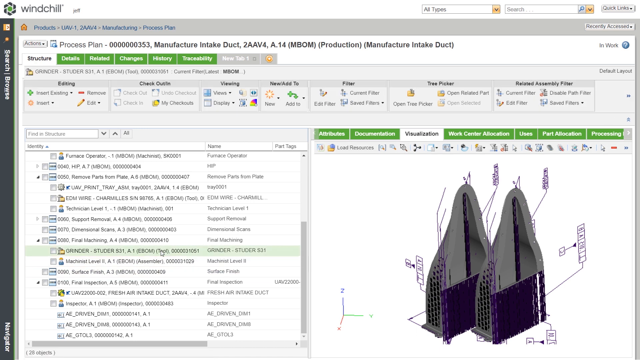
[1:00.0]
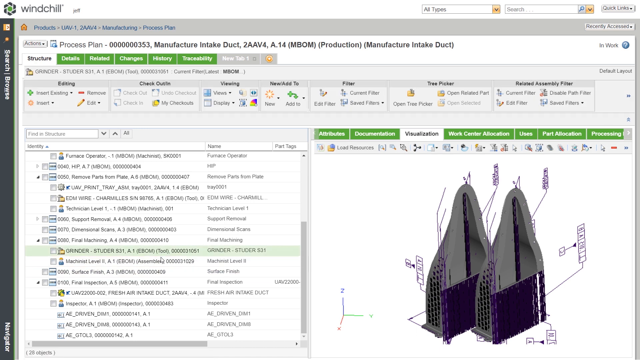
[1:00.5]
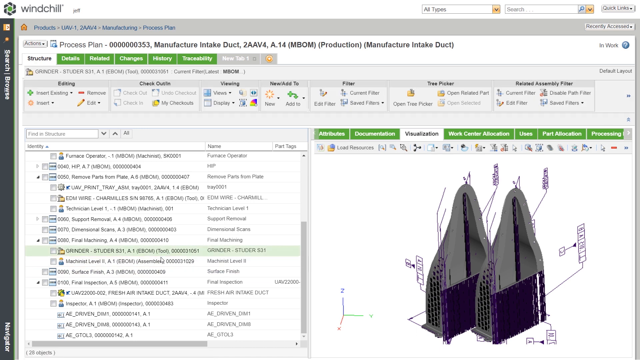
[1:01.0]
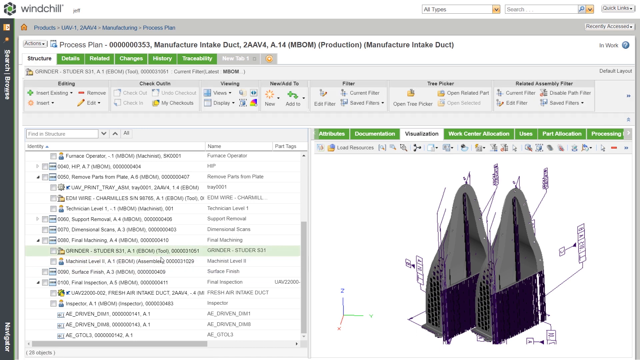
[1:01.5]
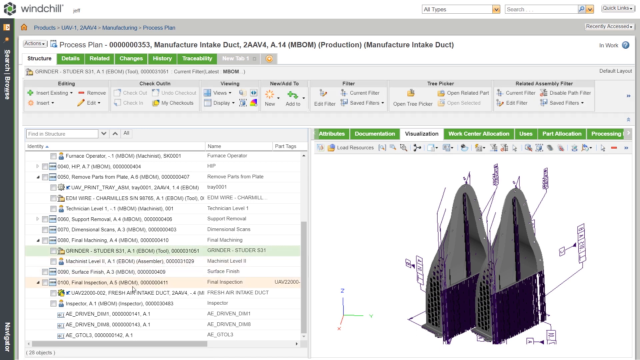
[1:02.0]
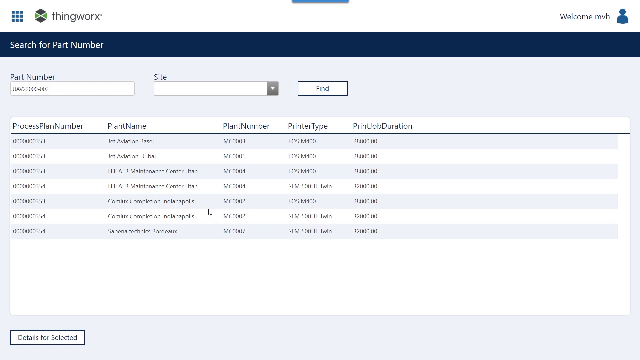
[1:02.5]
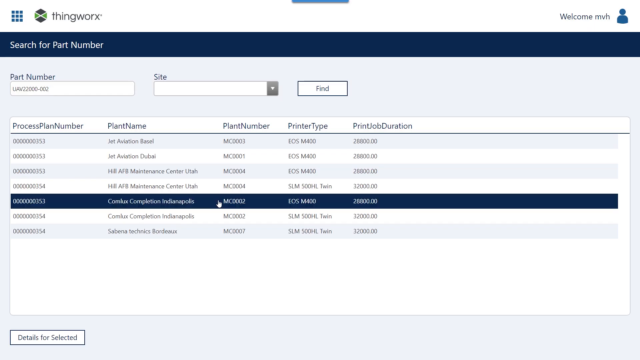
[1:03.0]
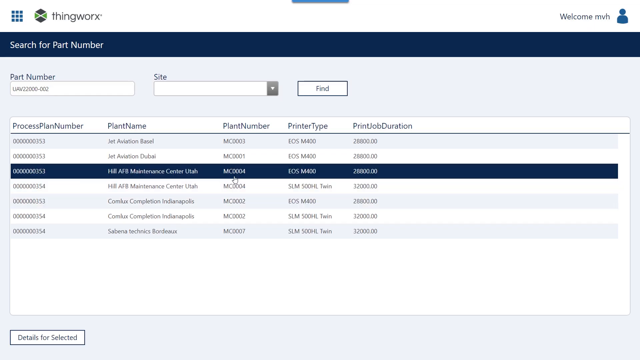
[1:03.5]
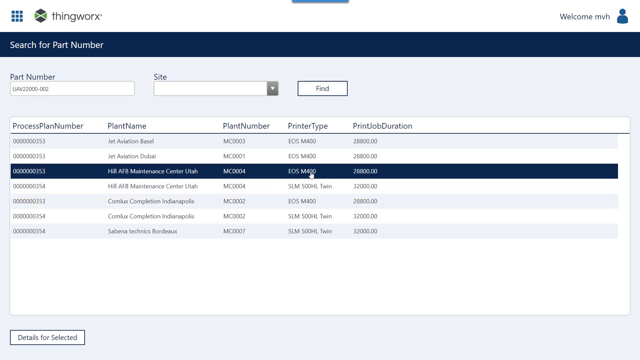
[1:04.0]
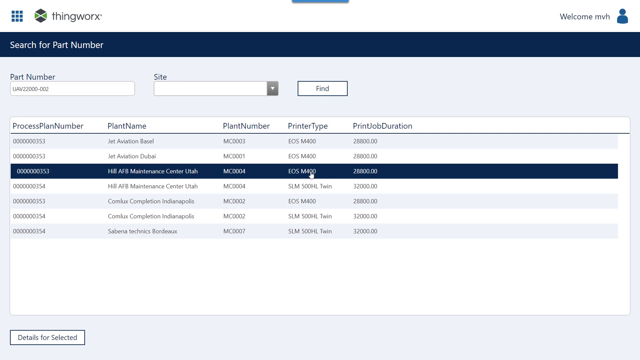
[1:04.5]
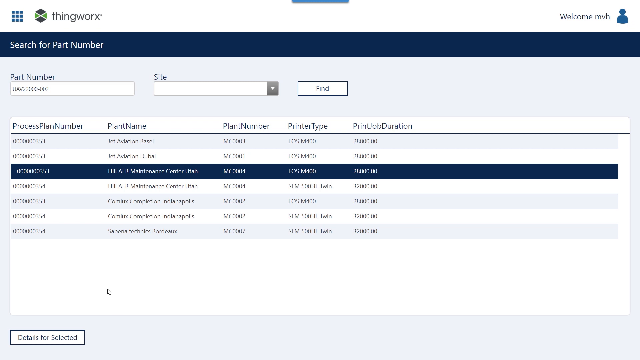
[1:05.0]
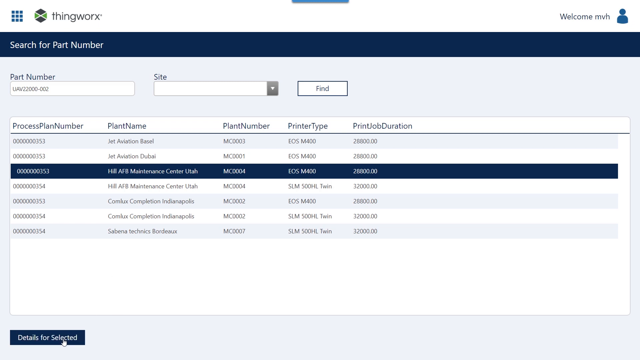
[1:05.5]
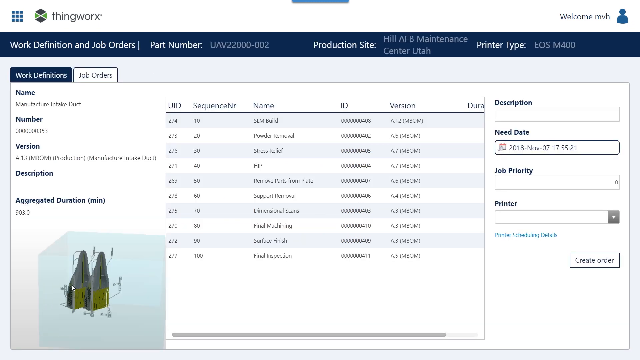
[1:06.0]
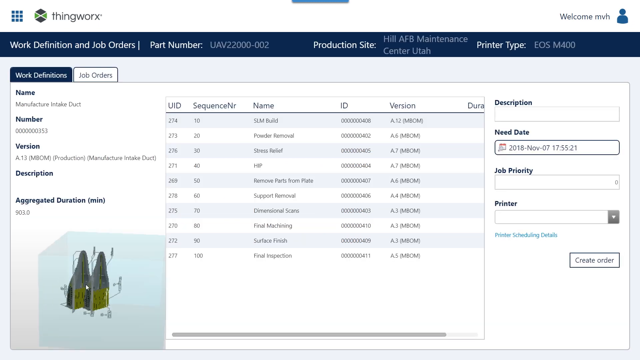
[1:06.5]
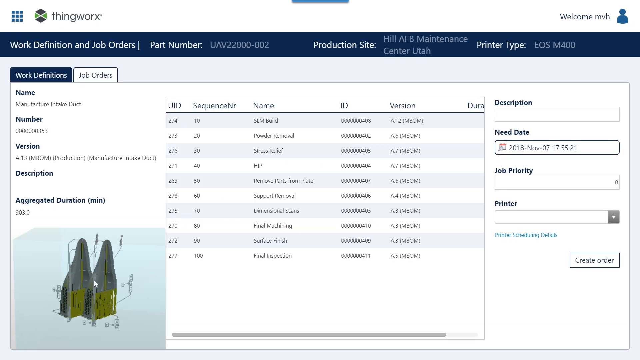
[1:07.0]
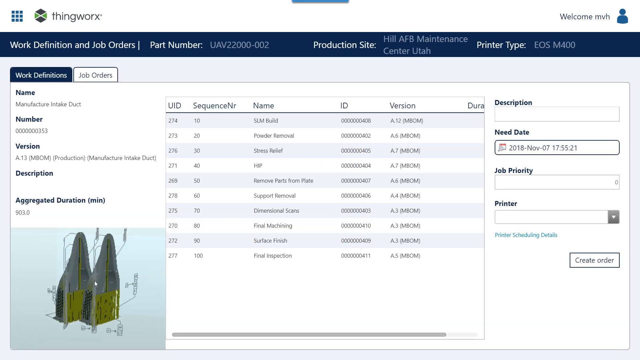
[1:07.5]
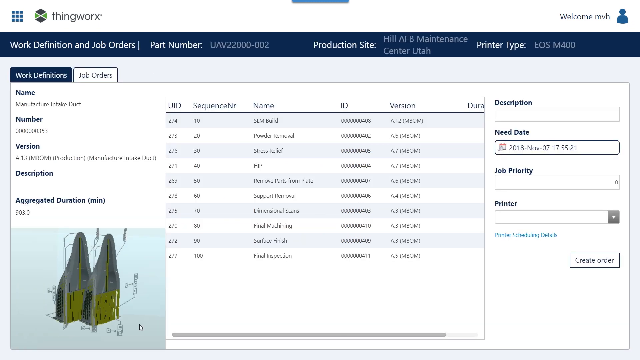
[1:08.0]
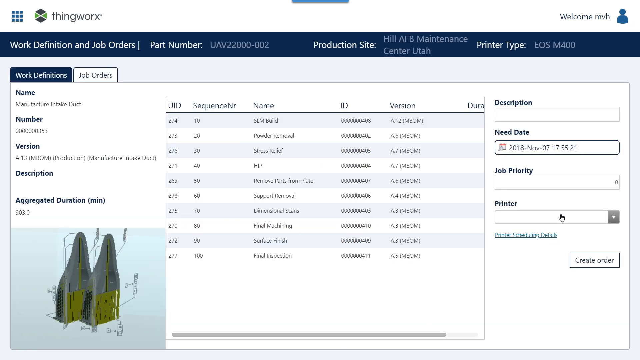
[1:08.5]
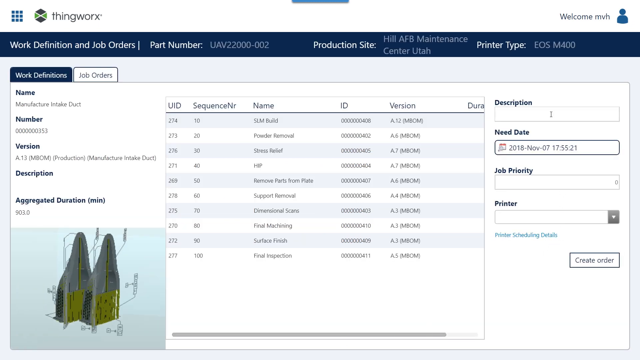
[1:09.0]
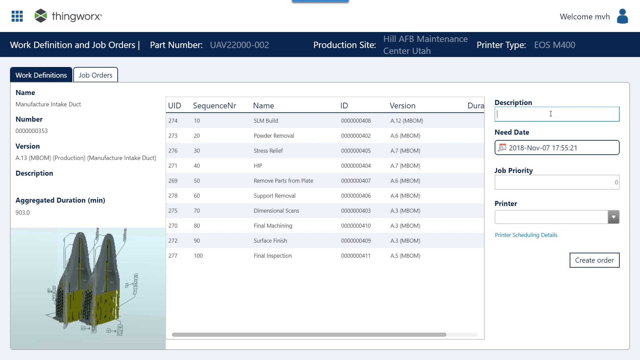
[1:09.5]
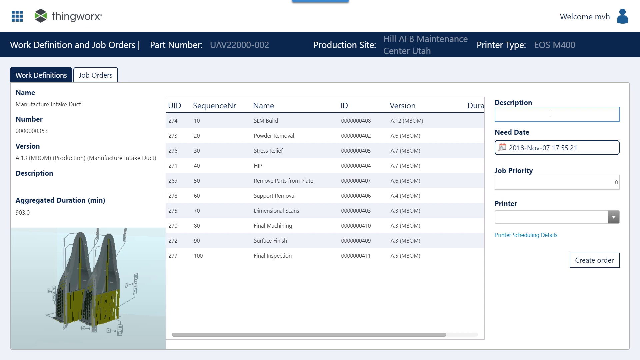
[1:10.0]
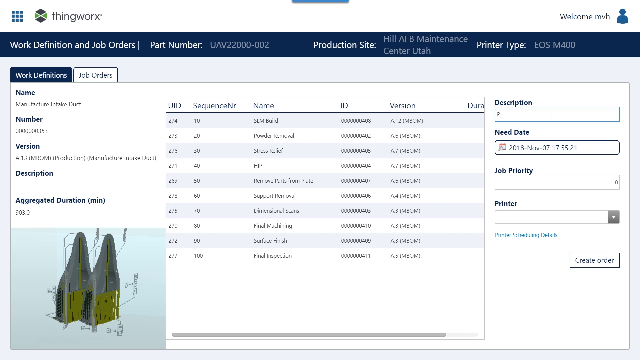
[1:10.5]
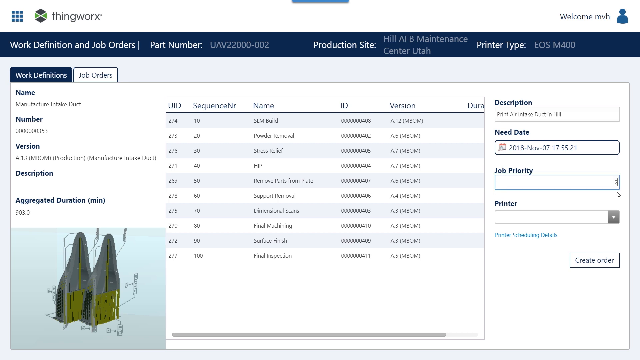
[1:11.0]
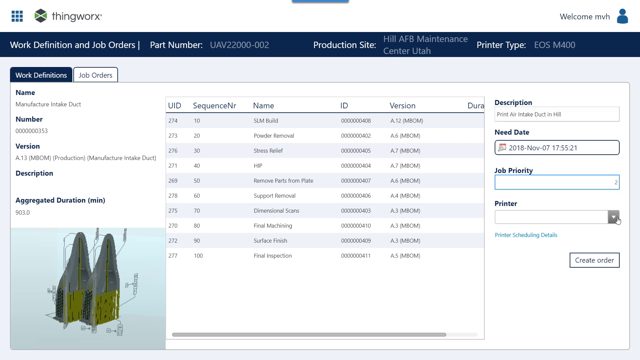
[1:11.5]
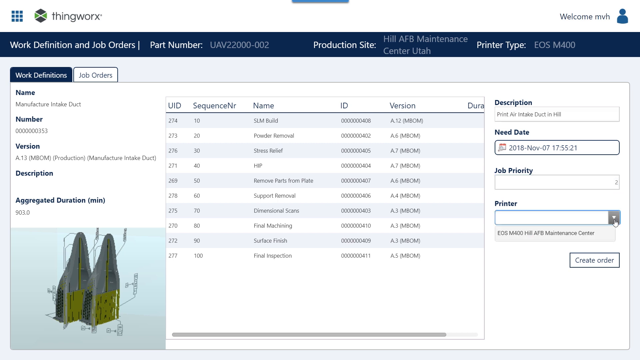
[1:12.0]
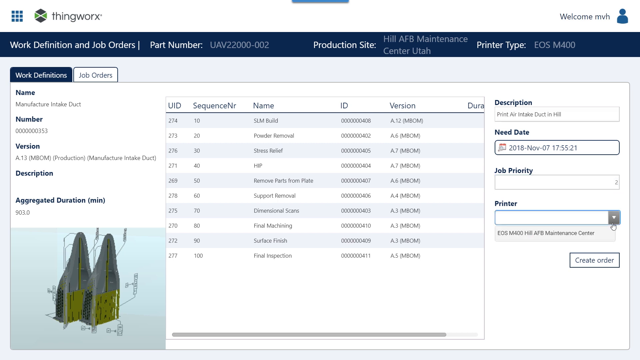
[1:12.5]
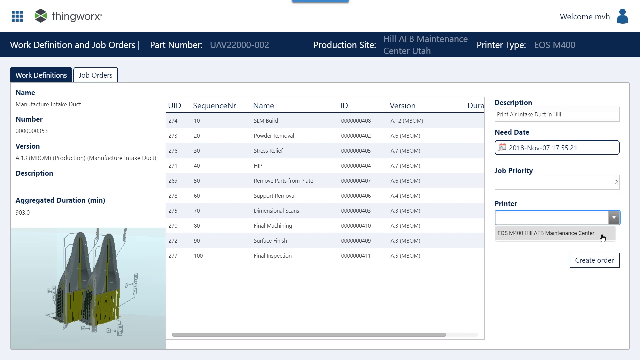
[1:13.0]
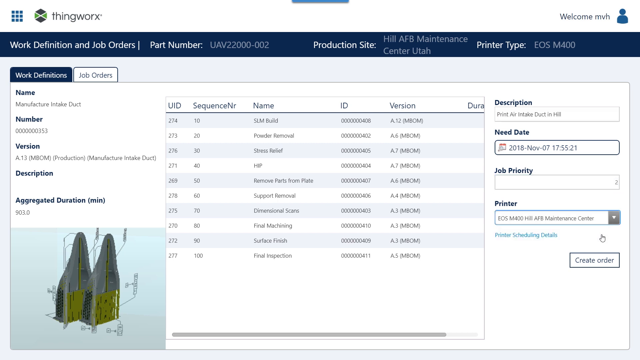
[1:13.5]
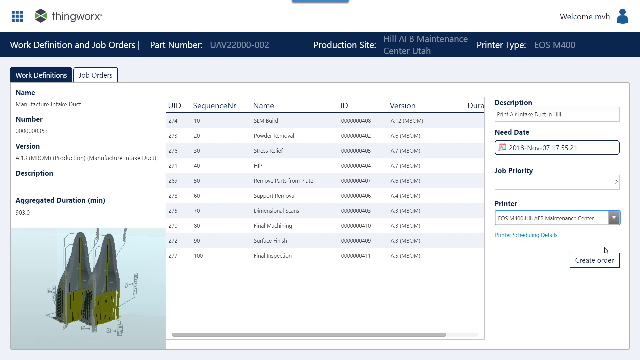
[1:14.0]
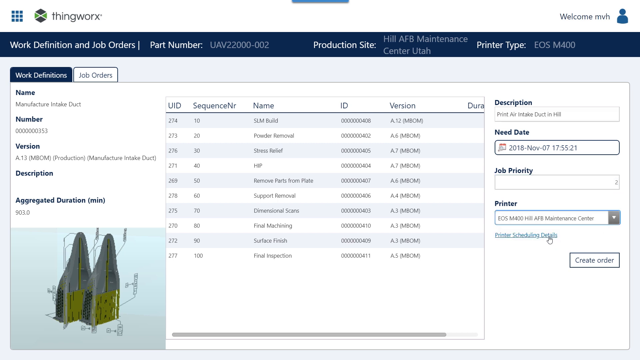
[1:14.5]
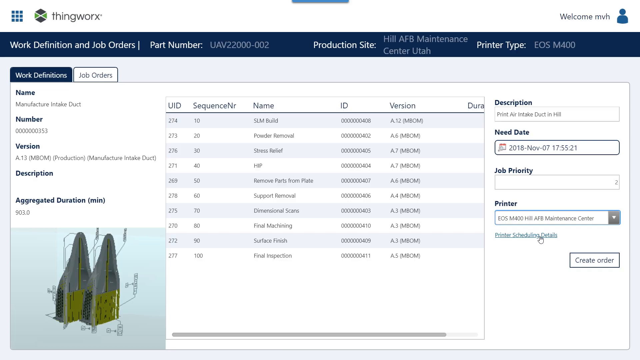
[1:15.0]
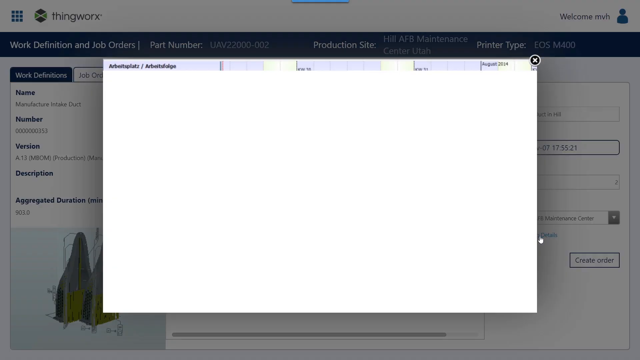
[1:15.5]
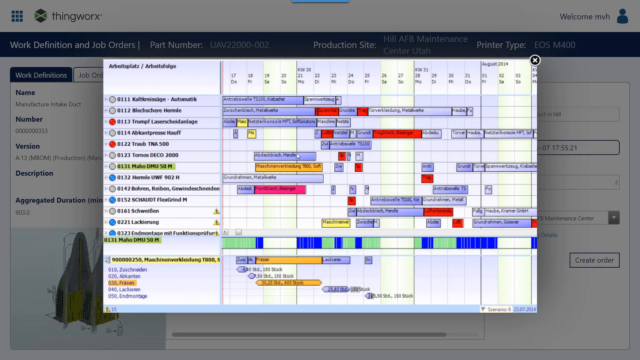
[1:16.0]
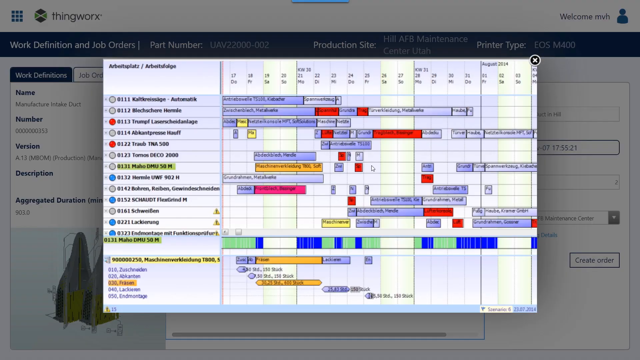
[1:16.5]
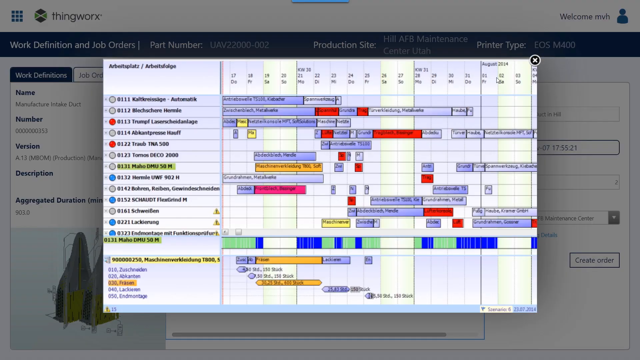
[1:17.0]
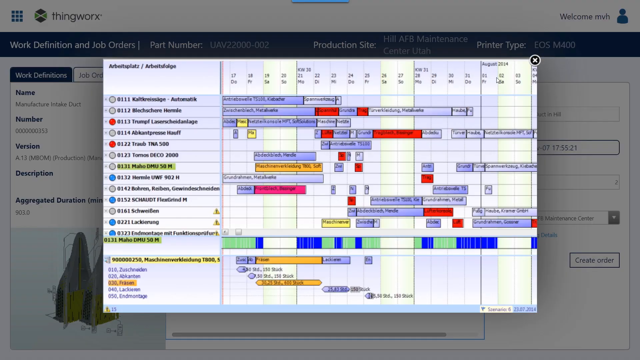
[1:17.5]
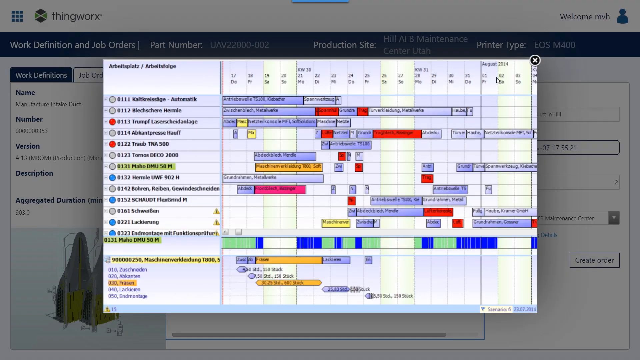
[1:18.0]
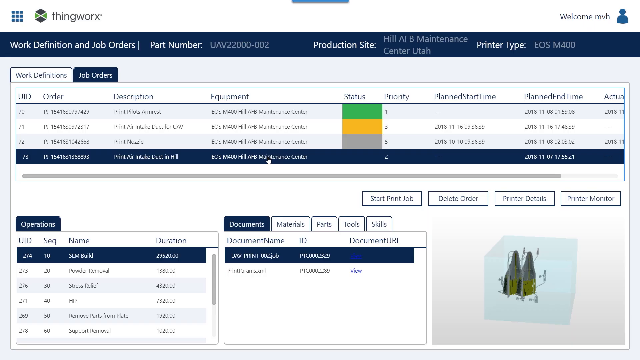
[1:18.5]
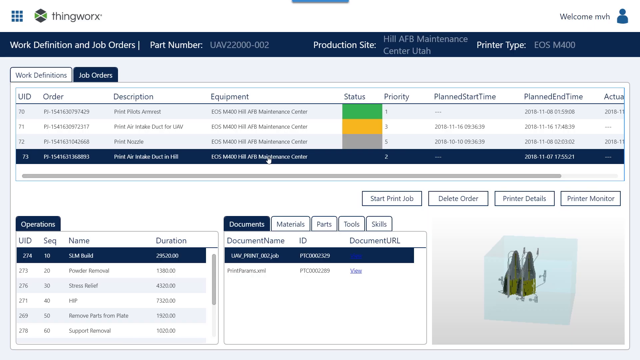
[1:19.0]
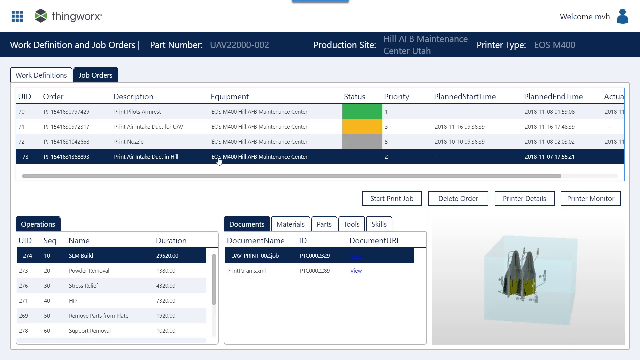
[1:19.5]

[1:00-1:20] A shared computer screen shows software for editing 3D objects. Many tabs and selections cover about 75% of the page, and the image being edited appears to be some sort of gray and purple pyramidal shape. The user clicks an item from the list, which is highlighted green, then scrolls down below it and clicks, which opens another type of software. At the top left it says "ThingWorks", and there are seven options to choose from; they choose the third and click on it in the fourth column. After scrolling down, the item they were working on in the other software is imported. They expand it to make it bigger, click on the right side of the image, and click "Description" to input text that says "Print Air Intake Duct". They select the "Printer" tab and select the one printer that is available, then select "Print Details" and "Pause". They look it over briefly; there are multiple brightly colored bars and tabs. They close that, and another window opens that says "Work Definition and Job Orders".